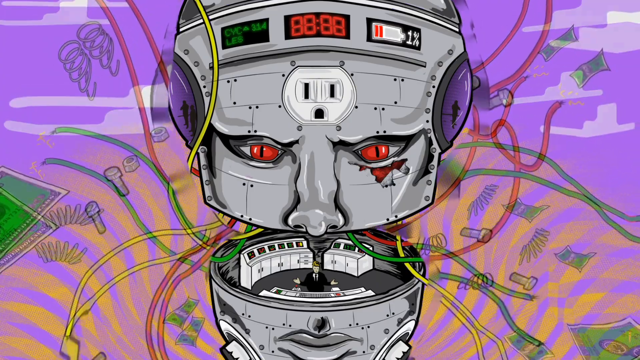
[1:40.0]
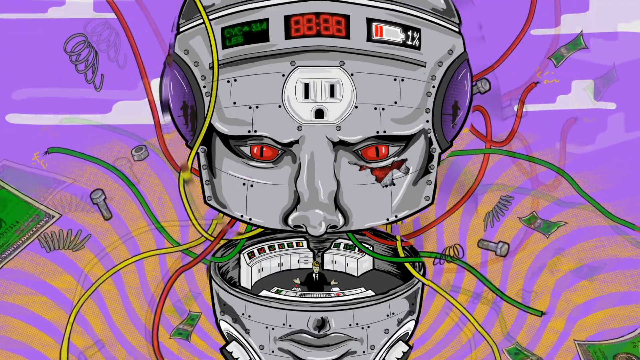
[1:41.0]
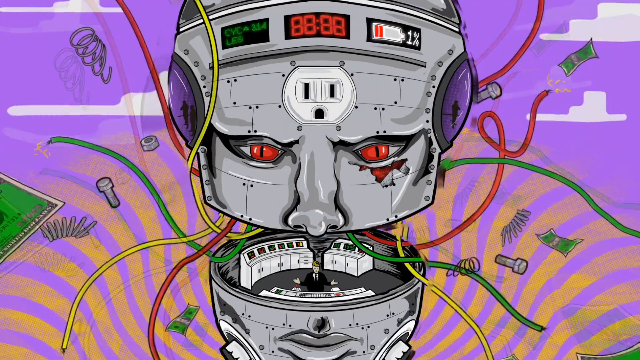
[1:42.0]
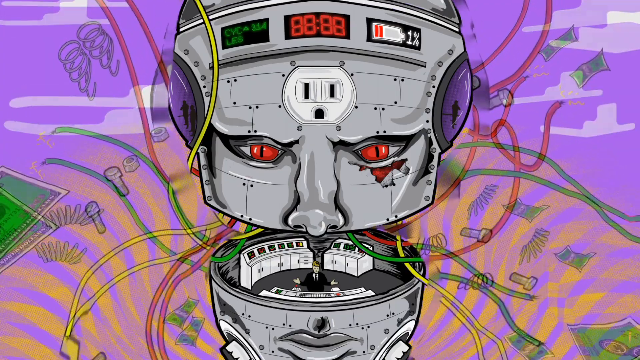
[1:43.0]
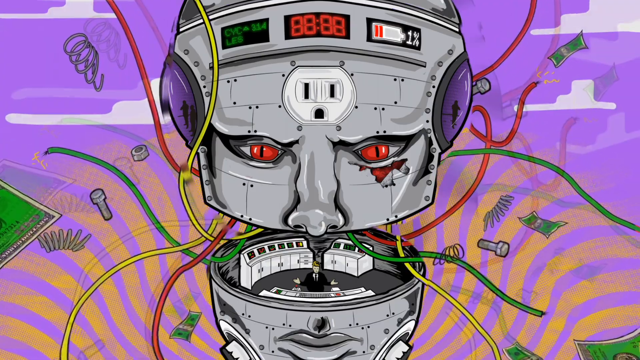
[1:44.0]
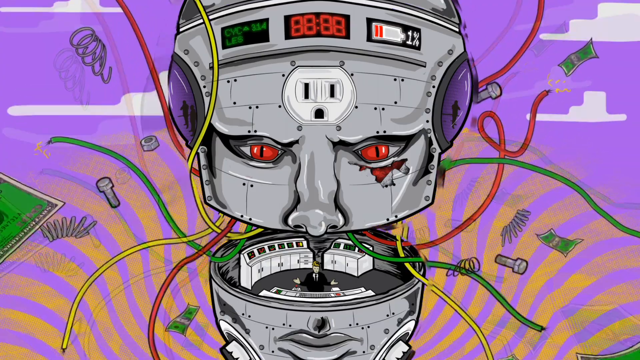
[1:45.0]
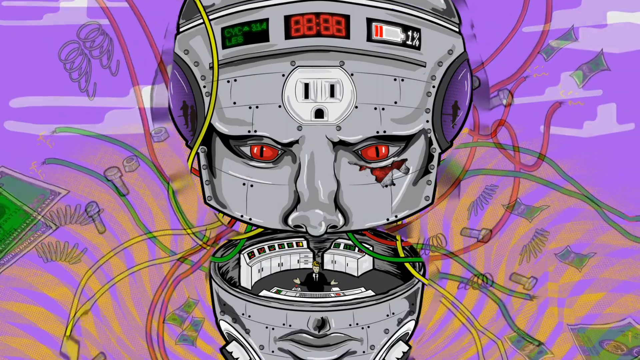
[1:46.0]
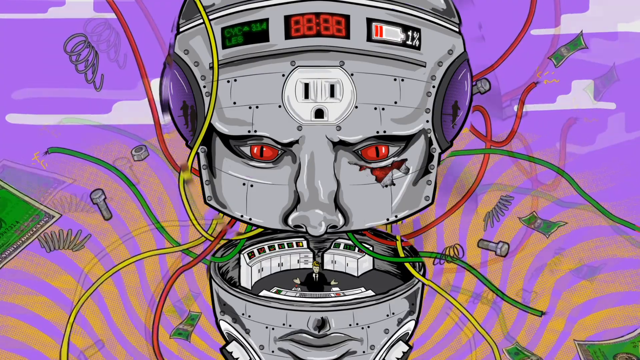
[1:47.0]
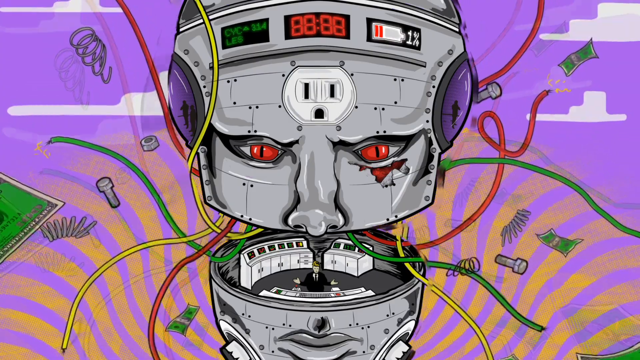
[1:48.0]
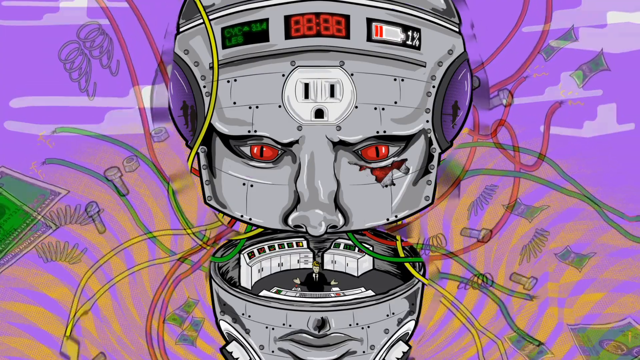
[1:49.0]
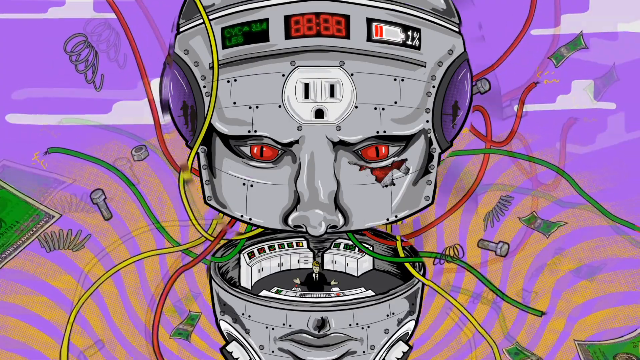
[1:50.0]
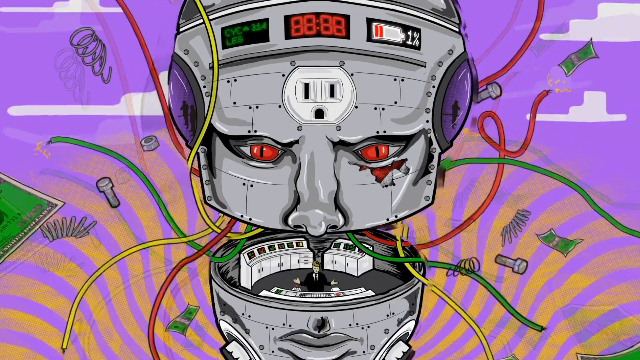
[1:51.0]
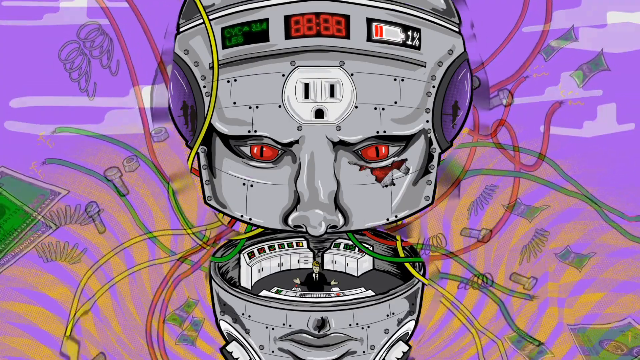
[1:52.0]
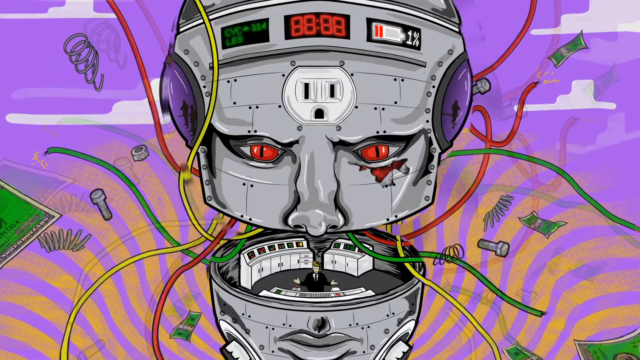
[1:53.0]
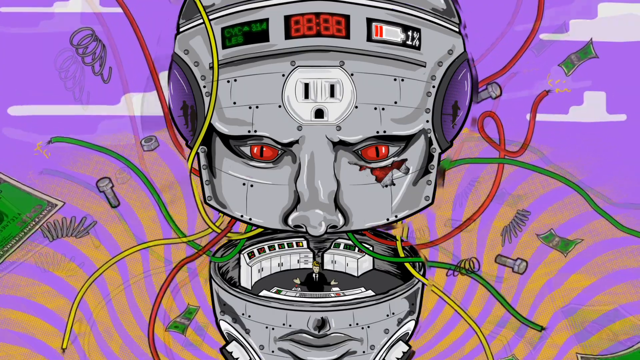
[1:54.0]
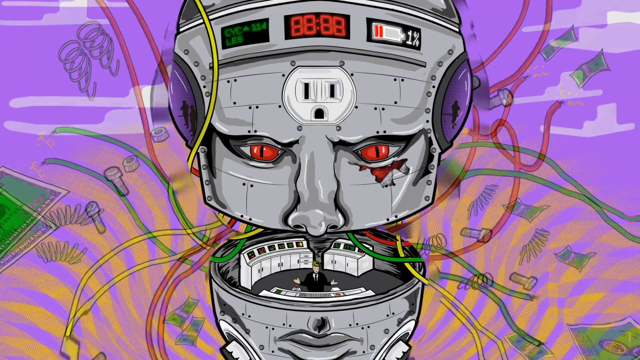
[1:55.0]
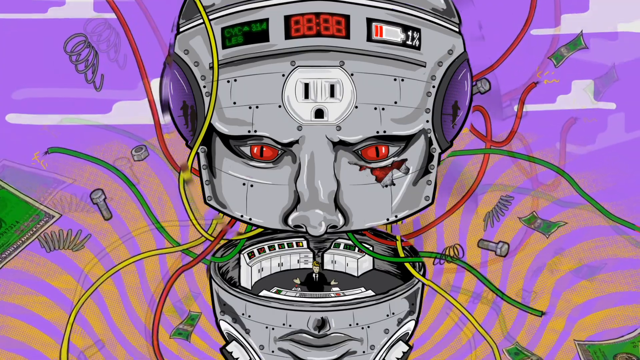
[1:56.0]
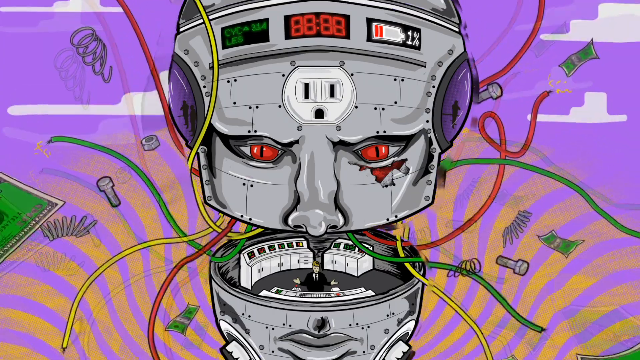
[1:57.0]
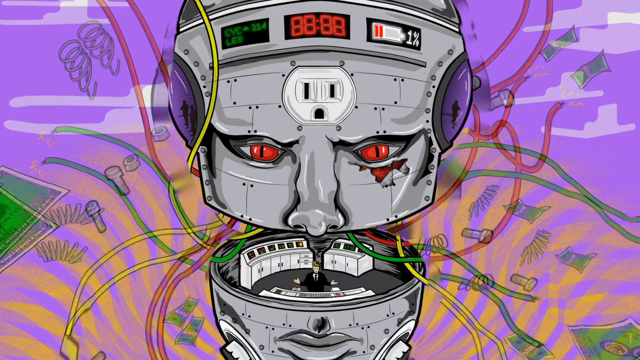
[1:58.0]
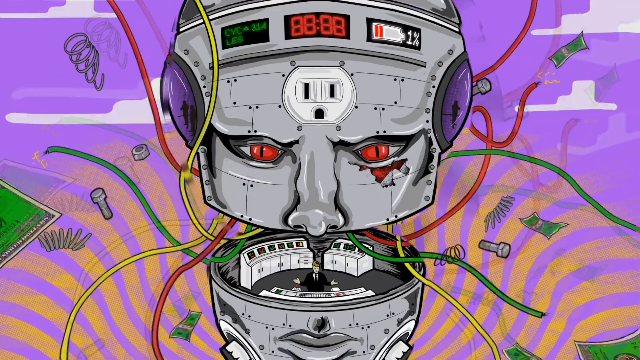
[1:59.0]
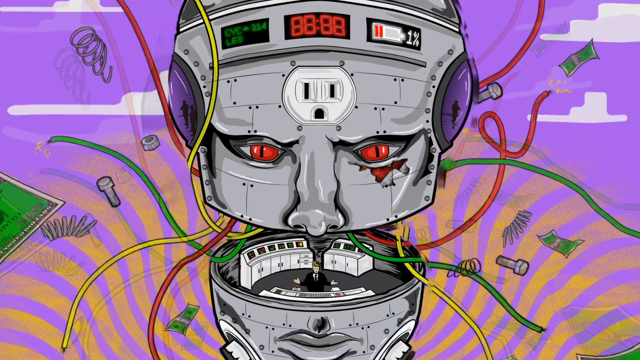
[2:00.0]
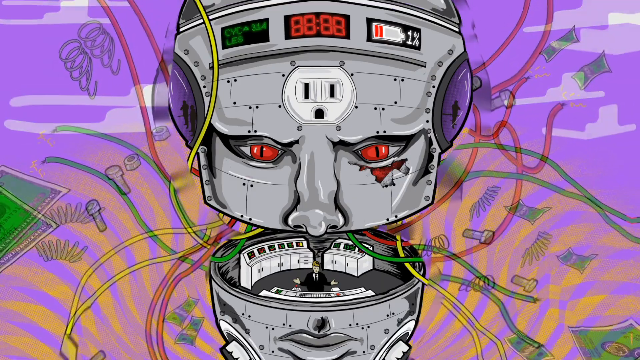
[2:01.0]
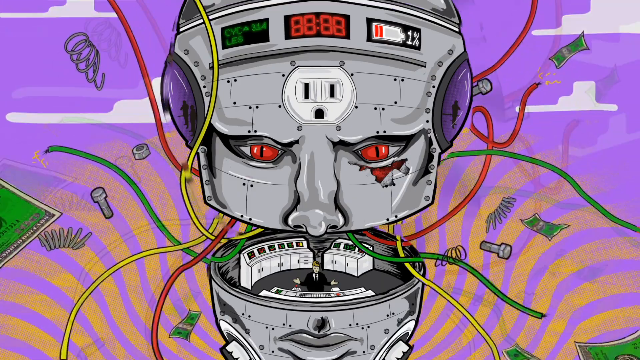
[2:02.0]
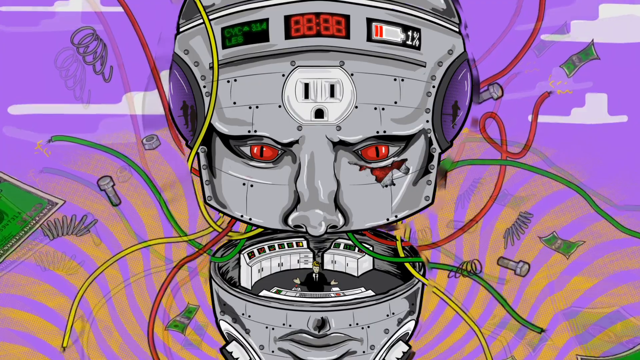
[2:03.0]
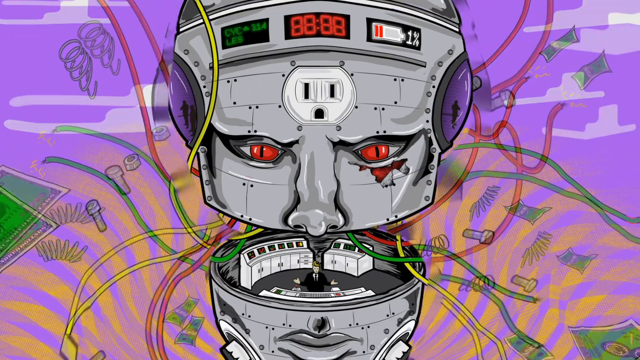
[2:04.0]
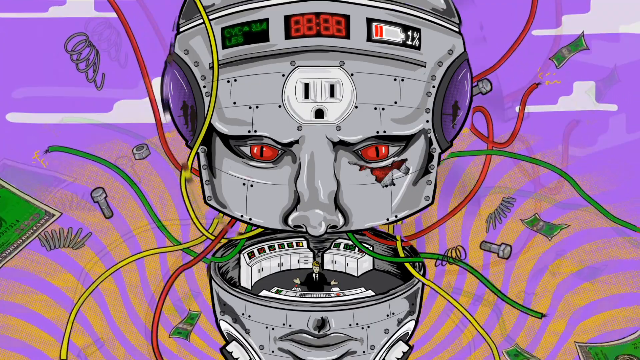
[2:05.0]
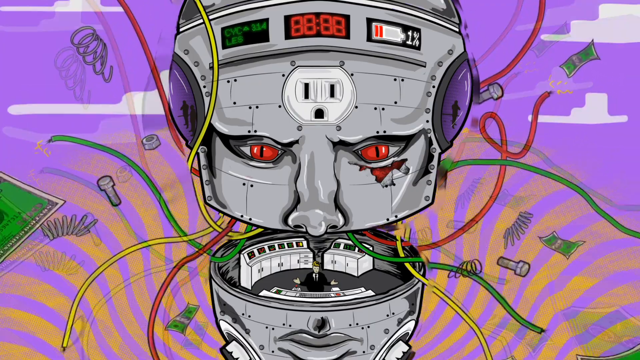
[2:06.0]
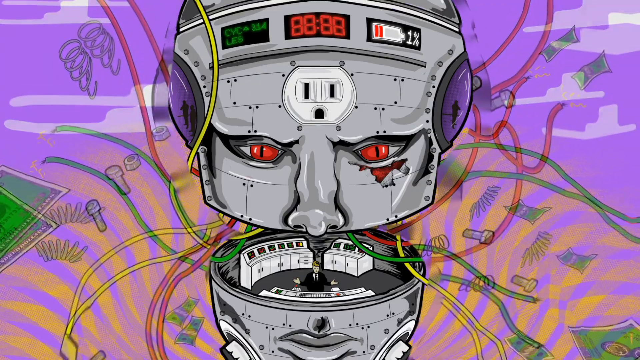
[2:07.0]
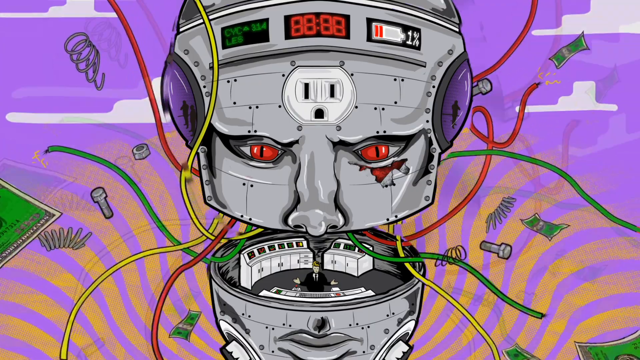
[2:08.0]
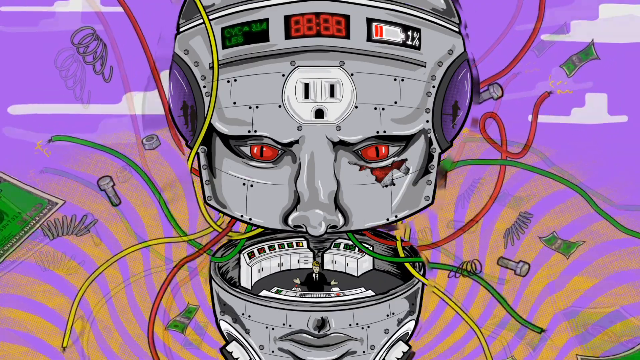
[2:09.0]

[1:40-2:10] The same robot is shown against a purple background with some white clouds. The background moves while the robot does not. The robot's head is gray with red eyes, and there is an injury under the eye on the viewer's right, the robot's left eye. A large white outlet is in the middle of the forehead. At the top is a clock reading "88;88", with a battery power indicator to its right showing 1% battery power remaining and "314 cycles" to its left. The robot's head looks like it normally closes but is separated apart. Red, yellow and green wires come out of the head and look like live wires with electricity. A man in a black suit and black tie stands in the control room part, in front of a white control panel, with his hands up. The bottom of the head has a mouth. In the background, yellow wavy lines move counterclockwise, along with springs, bolts, washers and dollar bills.